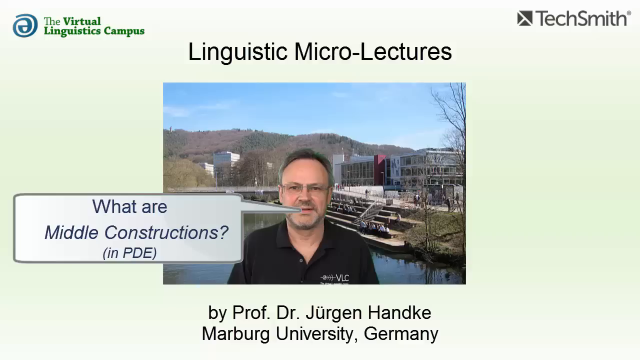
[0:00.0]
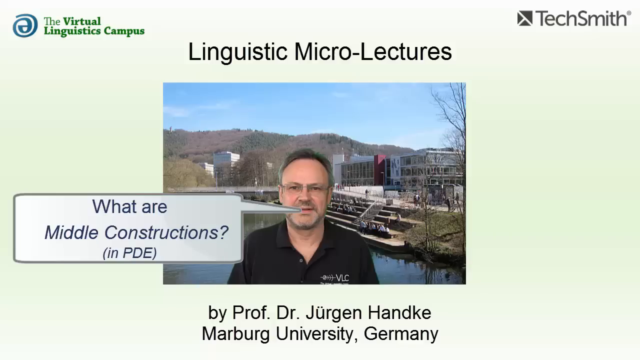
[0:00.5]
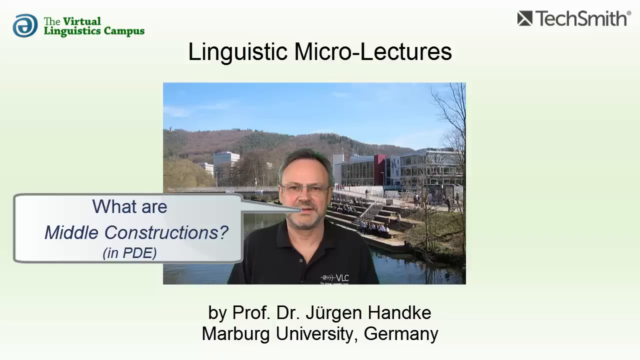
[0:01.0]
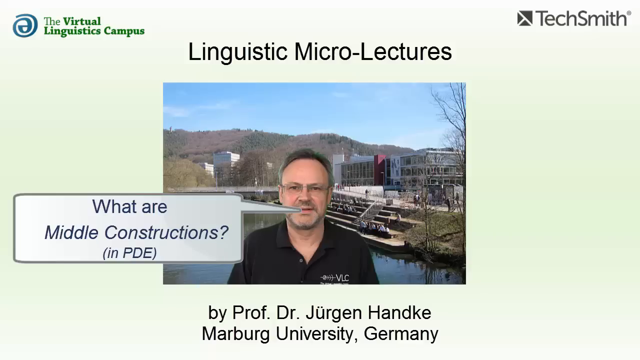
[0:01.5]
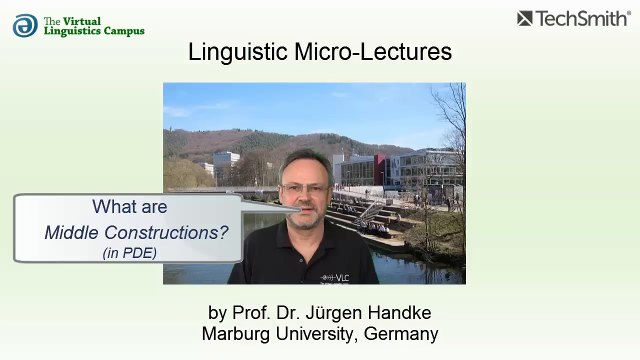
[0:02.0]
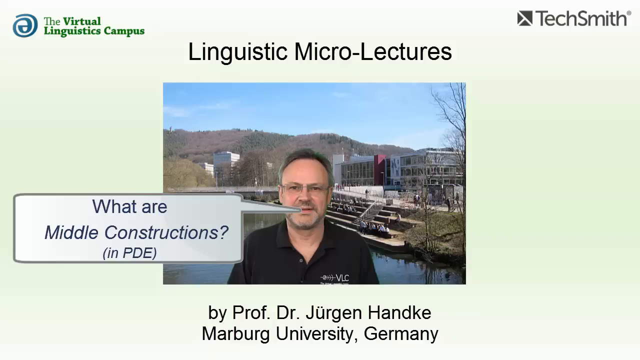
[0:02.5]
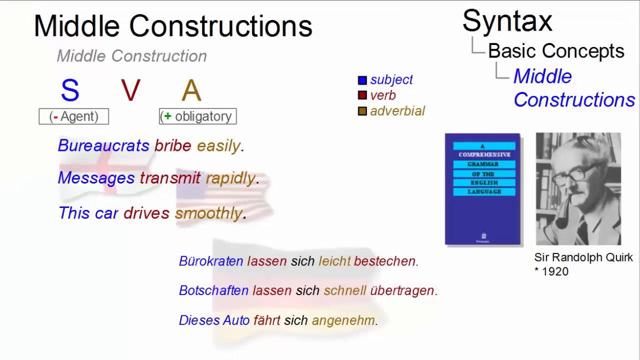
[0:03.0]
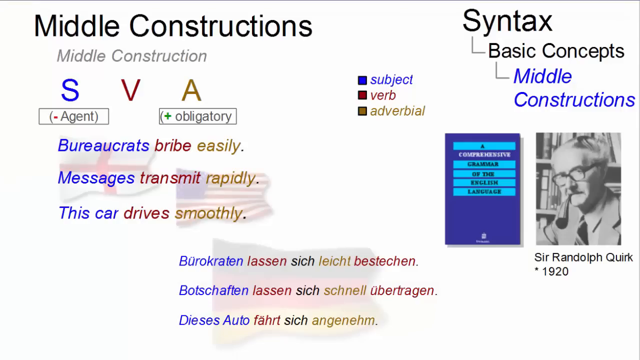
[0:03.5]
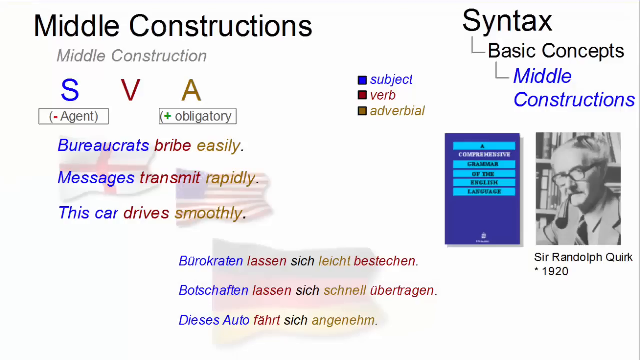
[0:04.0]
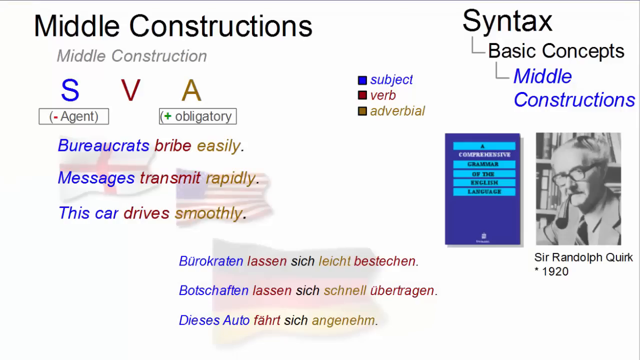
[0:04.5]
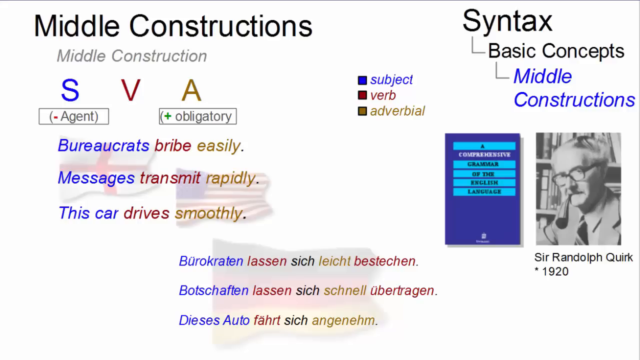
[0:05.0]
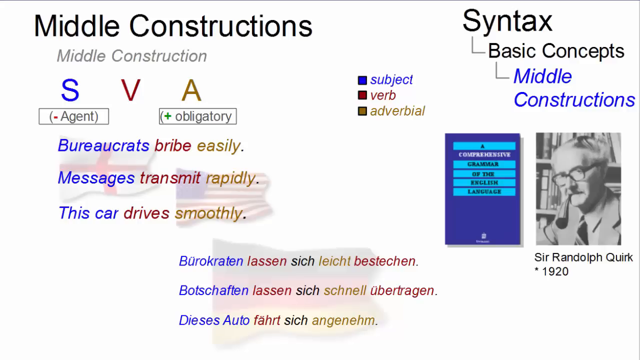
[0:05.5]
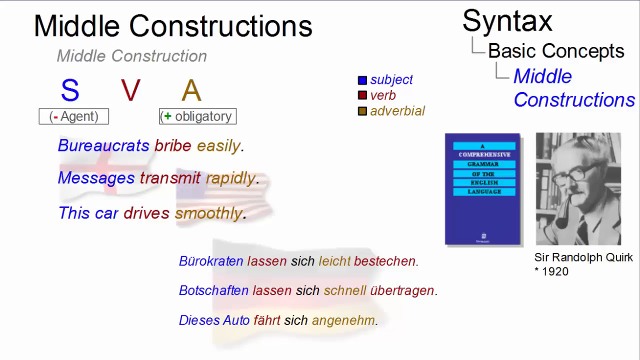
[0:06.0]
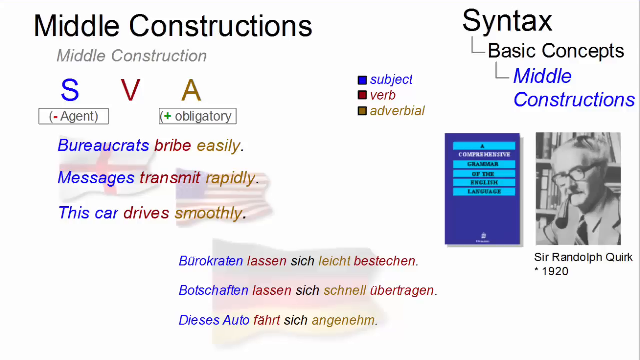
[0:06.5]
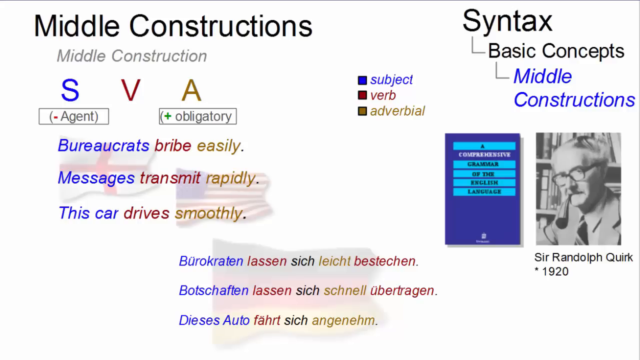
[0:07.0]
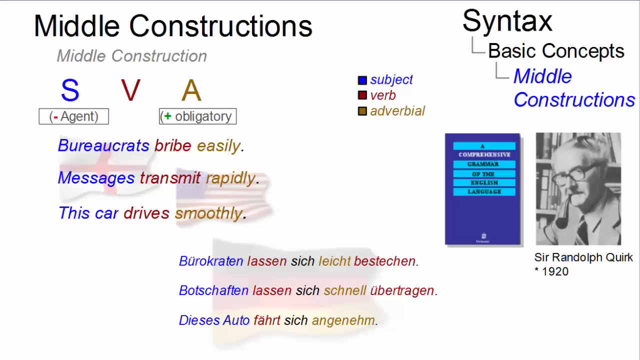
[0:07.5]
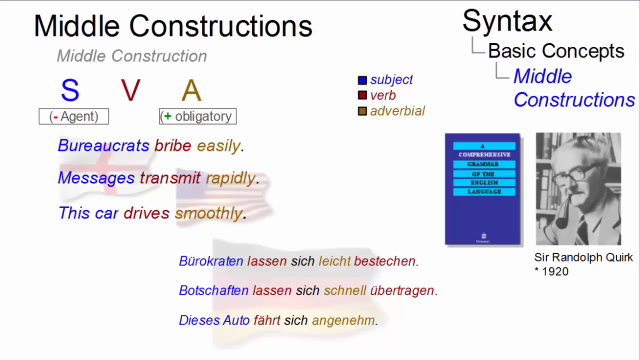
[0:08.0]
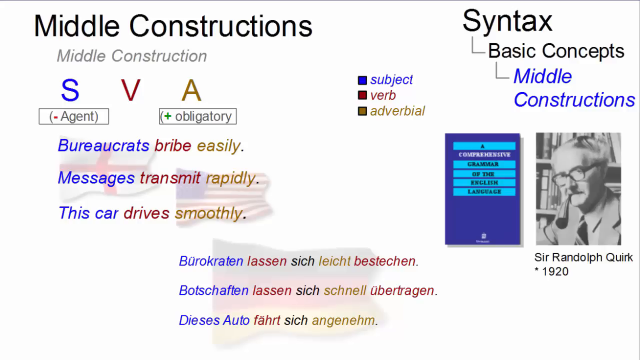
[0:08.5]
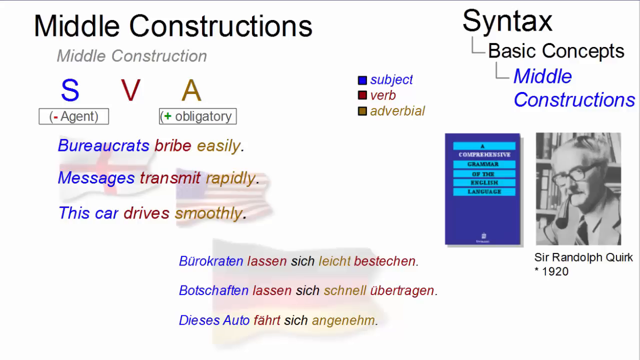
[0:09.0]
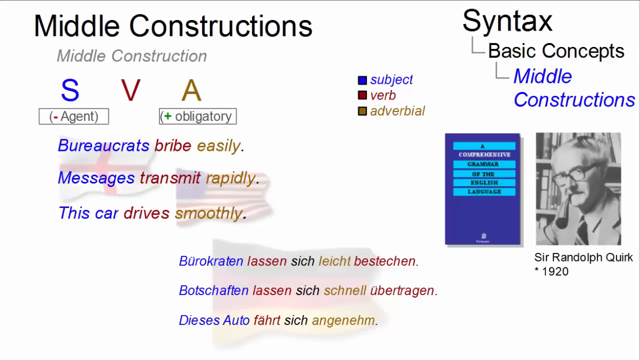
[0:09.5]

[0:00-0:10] A man is in the middle of the image, and a cloud message appears that says "what are middle constructions in PDE". At the top are the names "Linguistic Microlectures" and "virtual linguistic campus". A slide on middle constructions shows that they are built as SVA, with S as minus agent and A as obligatory. The subject is in blue, the verb in orange and the adverbial in orange. The examples are "bureaucrats drive easily", "messages transmit rapidly" and "this car drives smoothly". On the right side is a picture of Sir Randolph Quirk.